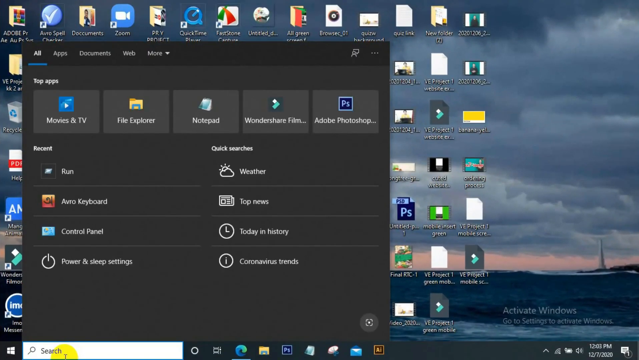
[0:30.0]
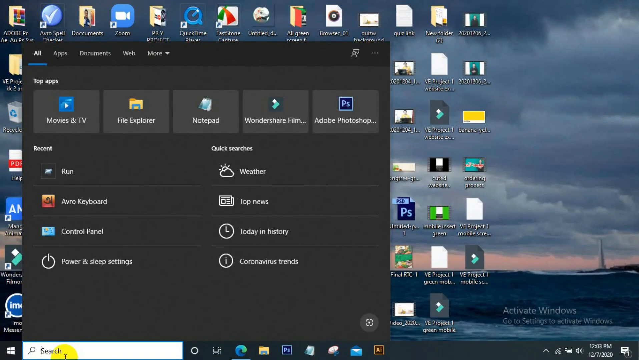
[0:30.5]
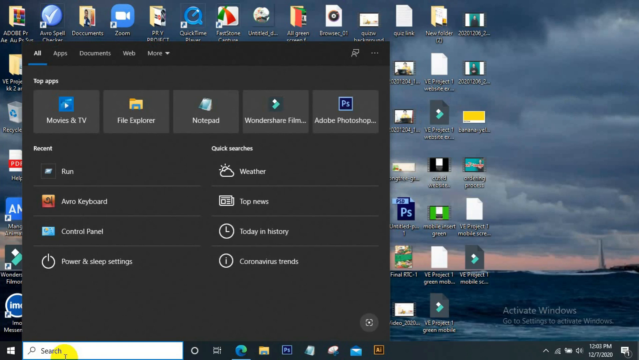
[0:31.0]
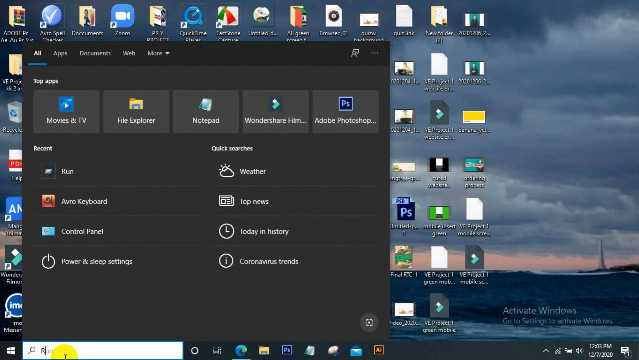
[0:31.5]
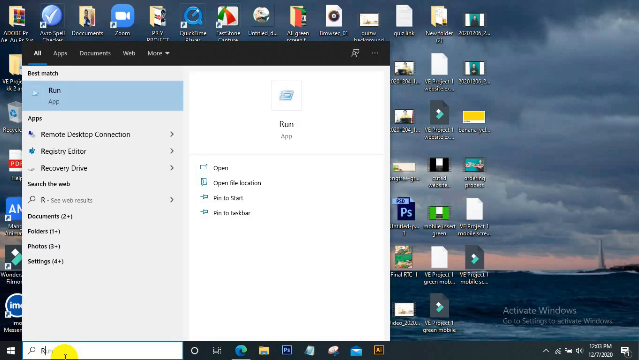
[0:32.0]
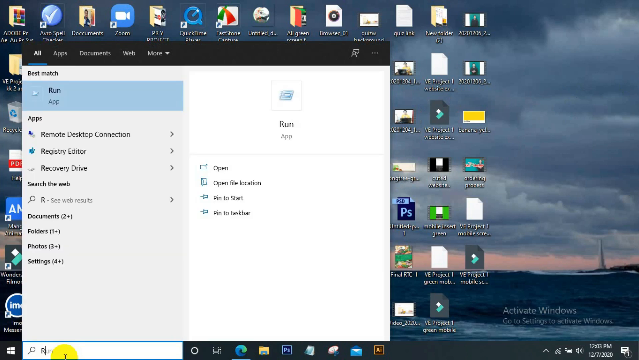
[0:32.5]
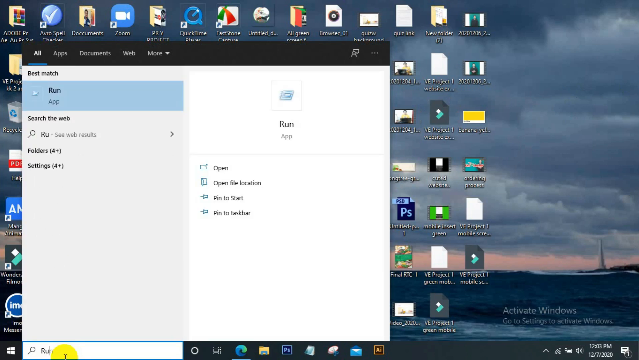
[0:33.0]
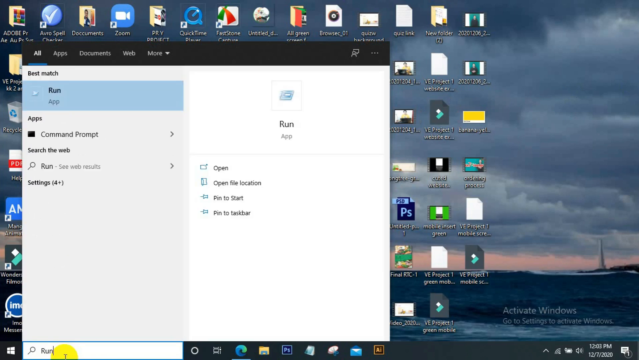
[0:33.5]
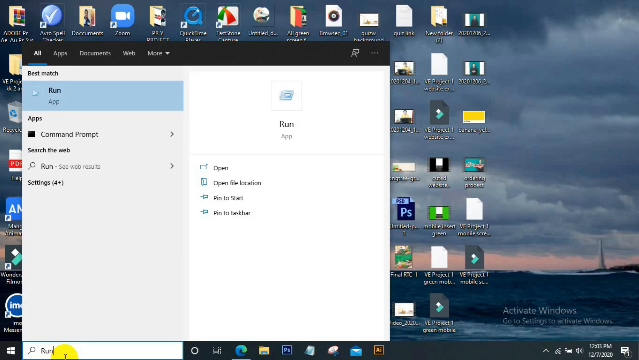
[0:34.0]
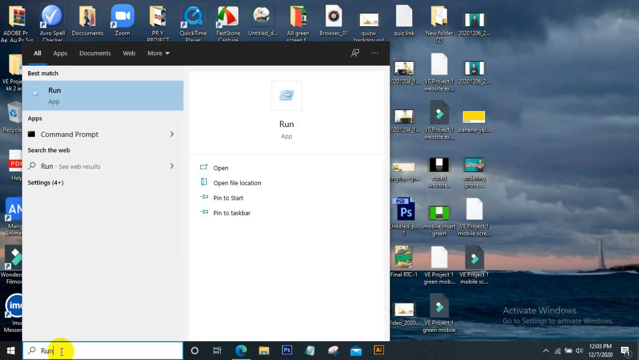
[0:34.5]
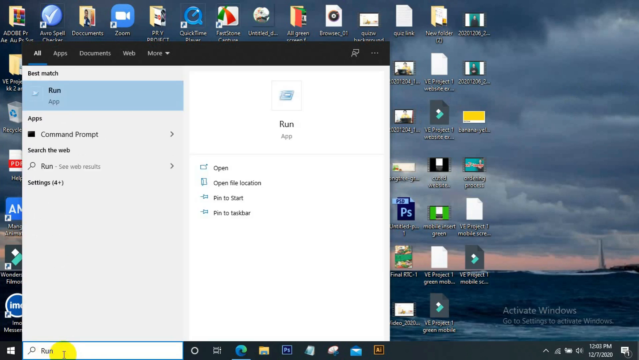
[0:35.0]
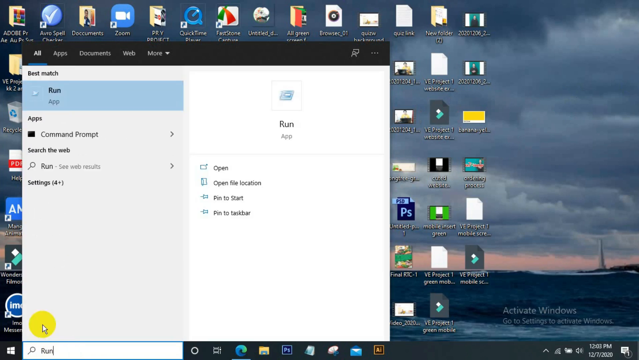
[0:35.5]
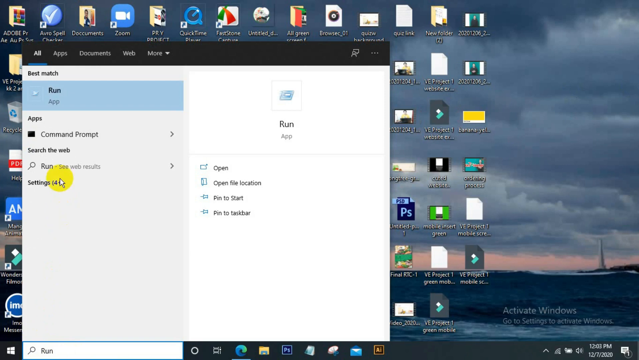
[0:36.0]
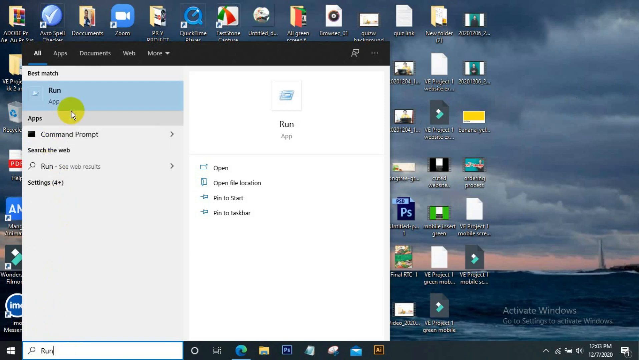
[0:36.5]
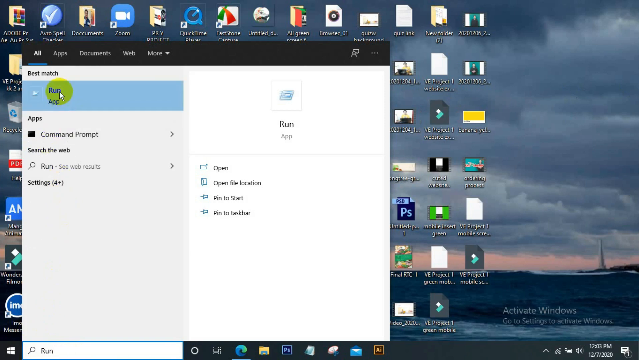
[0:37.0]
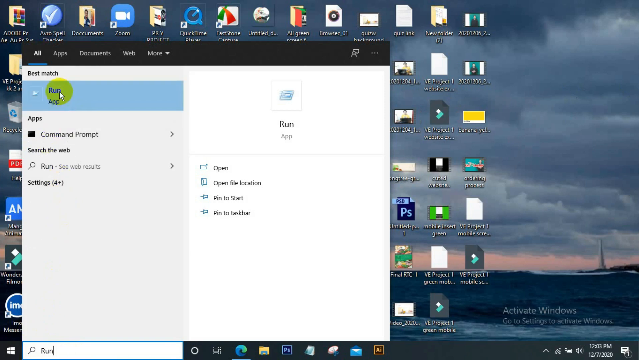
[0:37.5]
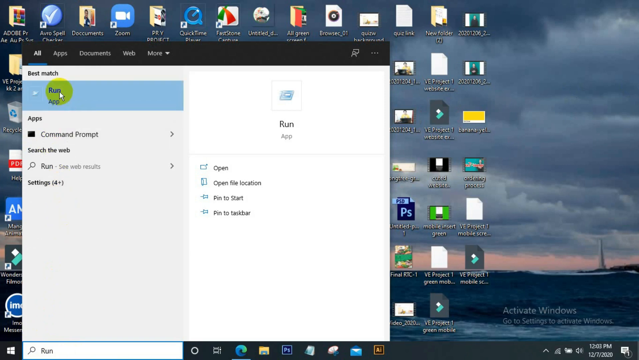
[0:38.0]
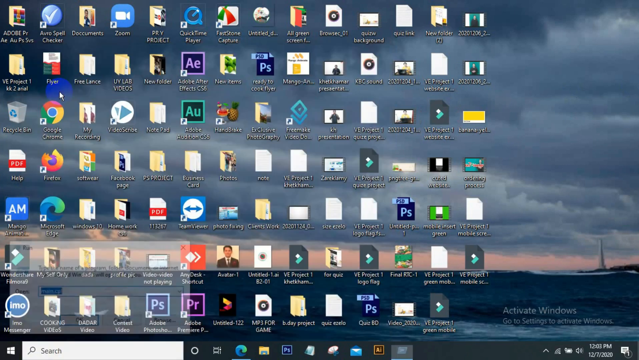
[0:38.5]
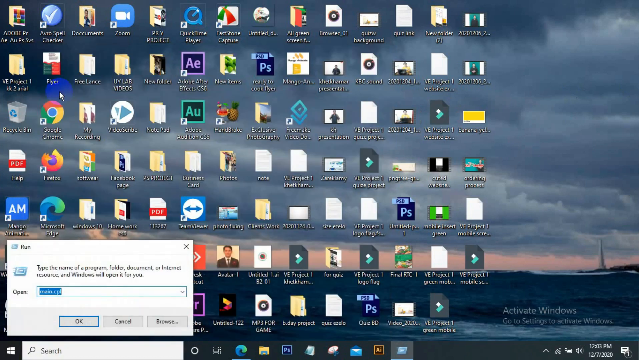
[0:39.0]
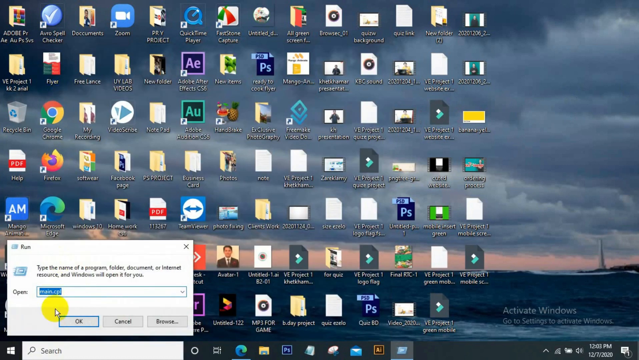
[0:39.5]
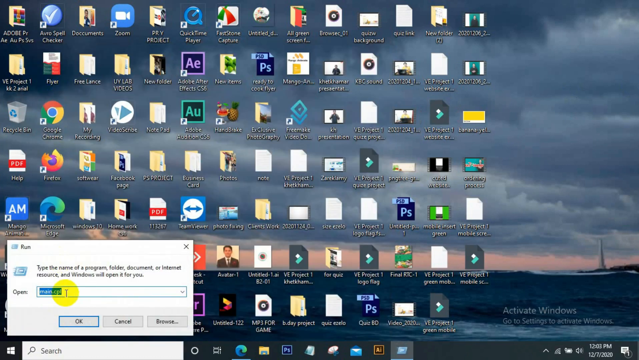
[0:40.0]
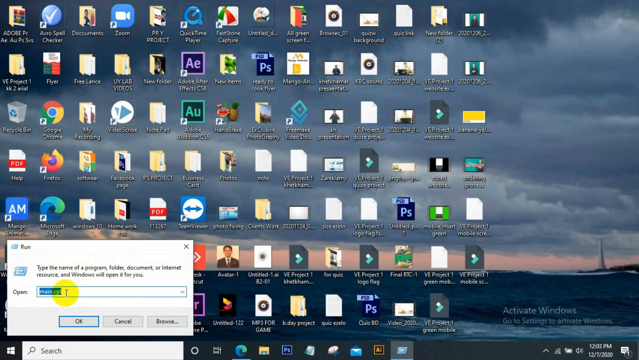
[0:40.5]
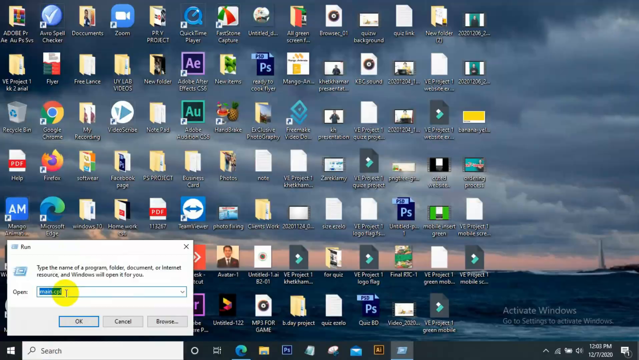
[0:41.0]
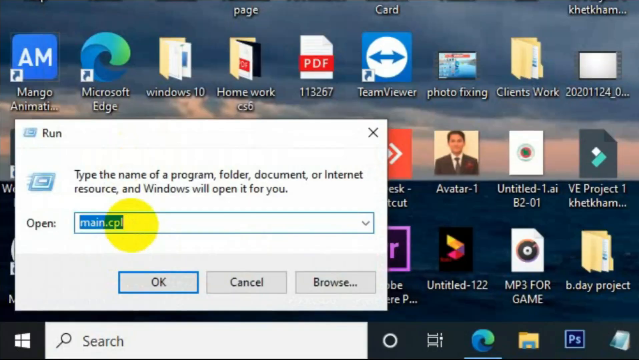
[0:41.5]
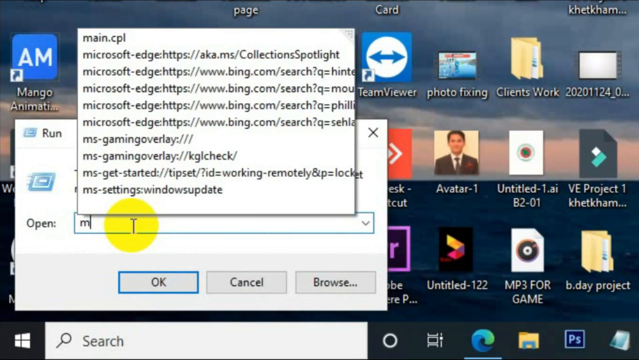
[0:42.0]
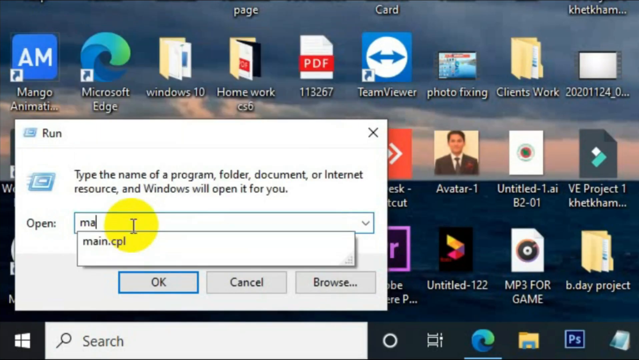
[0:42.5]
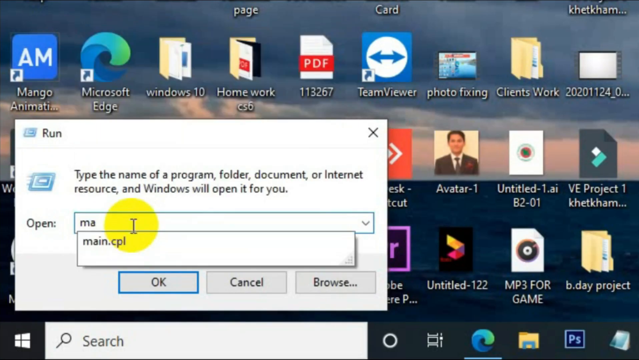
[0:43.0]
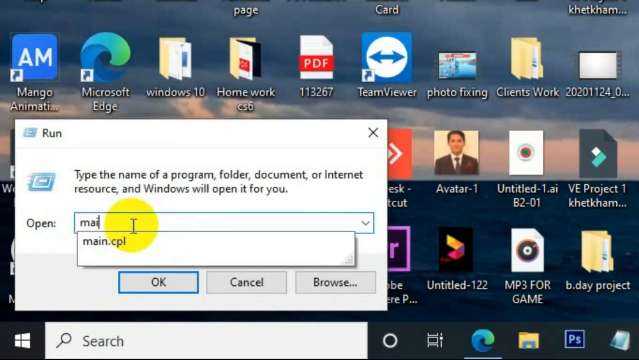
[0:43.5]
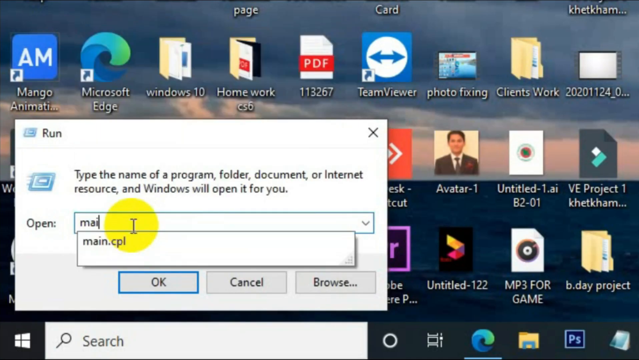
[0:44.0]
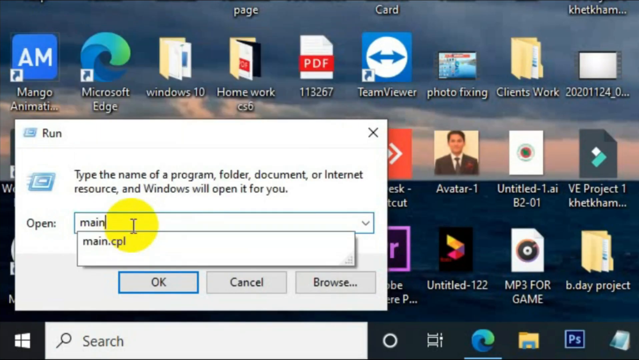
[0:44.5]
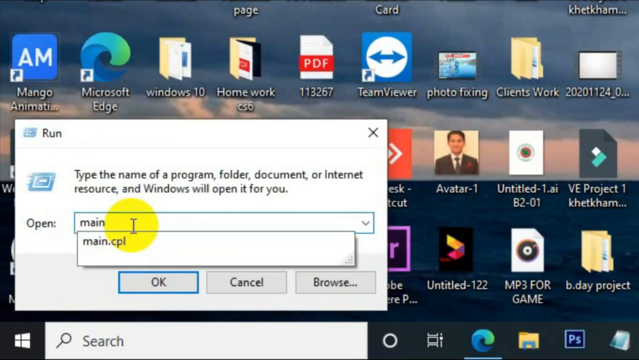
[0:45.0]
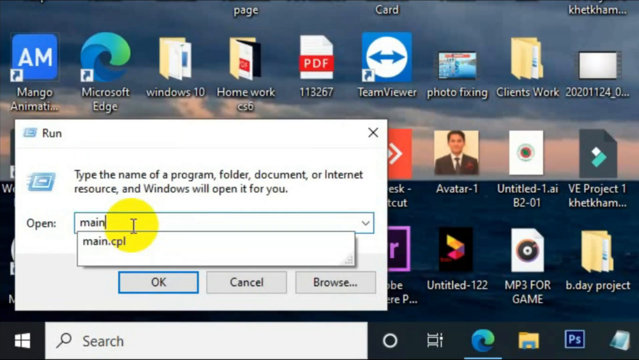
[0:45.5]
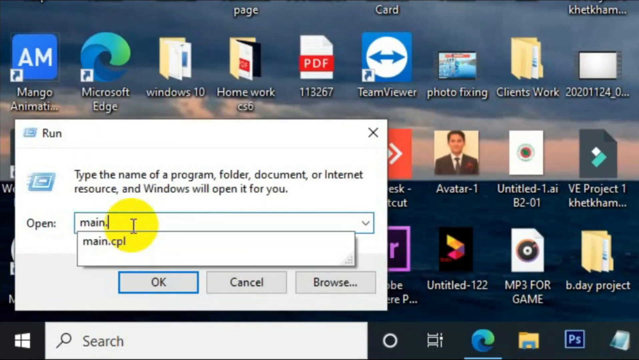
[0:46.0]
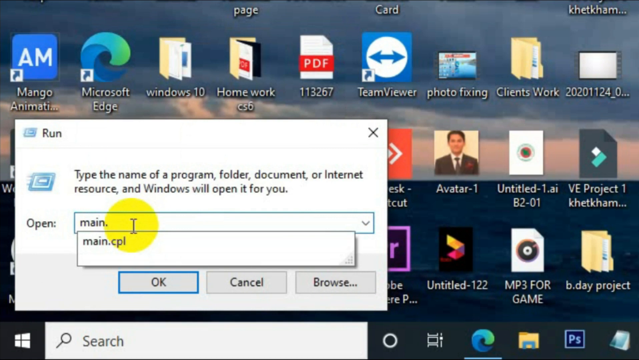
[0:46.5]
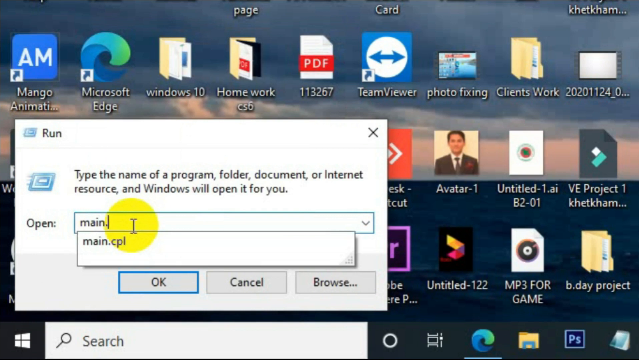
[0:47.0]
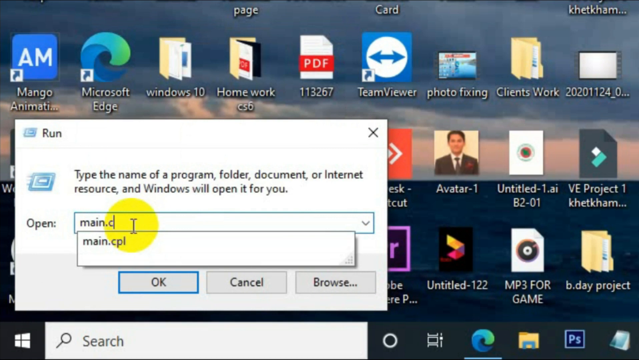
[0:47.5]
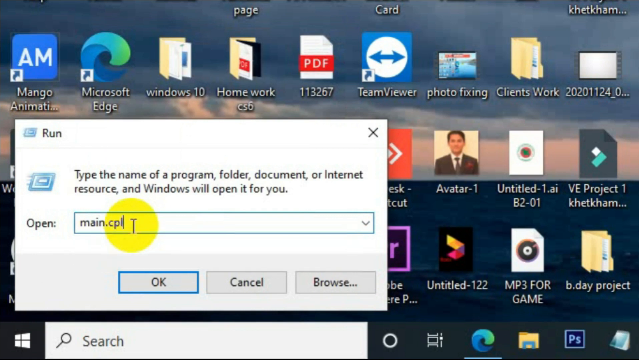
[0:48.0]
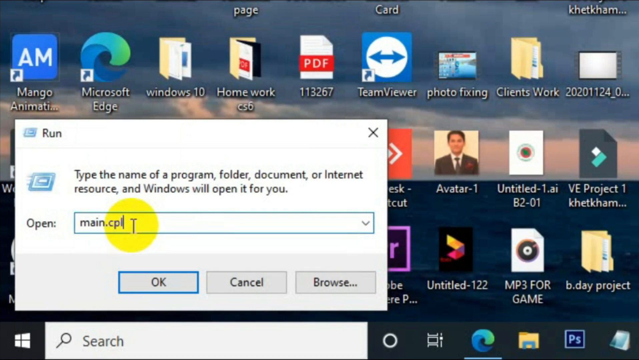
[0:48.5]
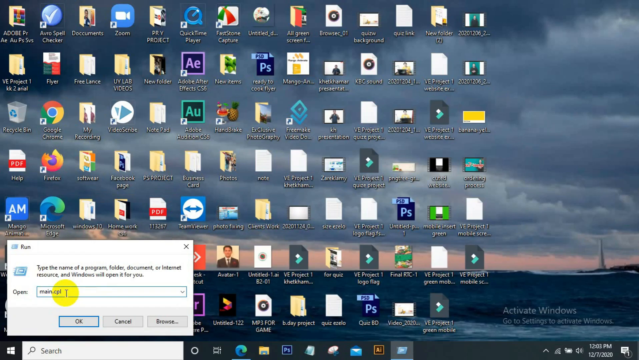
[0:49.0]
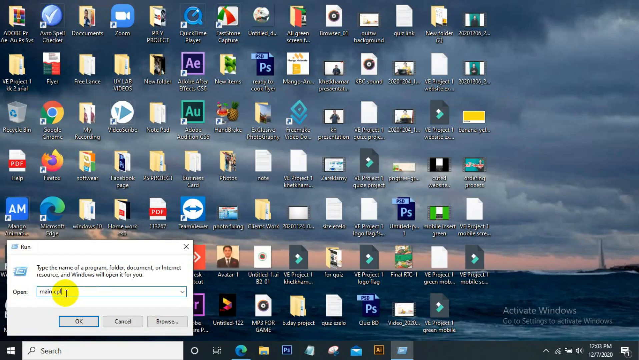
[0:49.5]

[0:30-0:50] The Start menu pop-up in the left corner of the screen changes from dark gray to a light theme and shows search results, the top one being an app called Run. As more characters are typed, a second result titled "Apps Command Prompt" appears below the first. The mouse cursor, highlighted by a yellow circle around it, moves up toward the top result, Run App, which turns blue when the cursor is over it. The user clicks, the Start menu goes away, and a small box titled "Run" appears in the bottom left of the screen, with a text field for typing a command or program to run. The user expands the window to take up a larger portion of the screen, making it easier to read. The Run dialog box says "Type the name of a program". The user clicks in the text field and types "MAIN.CPL".